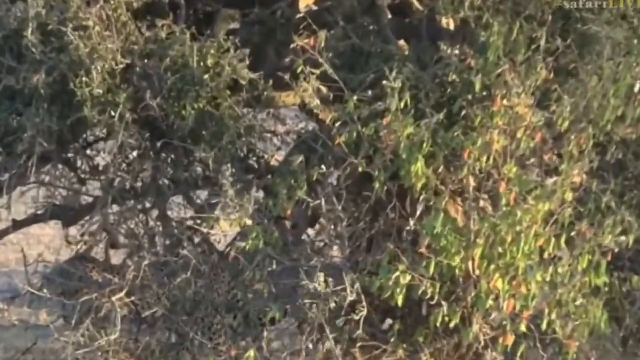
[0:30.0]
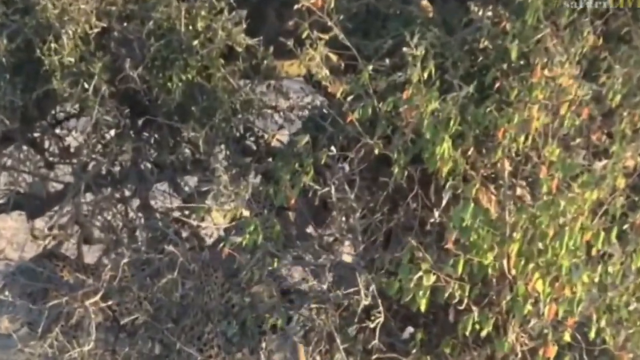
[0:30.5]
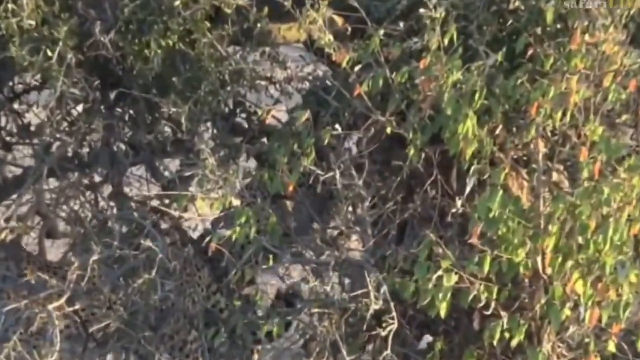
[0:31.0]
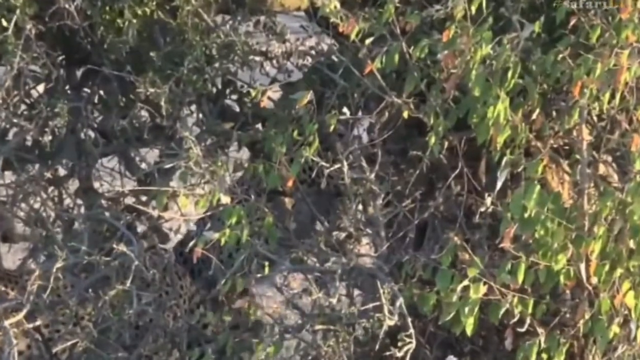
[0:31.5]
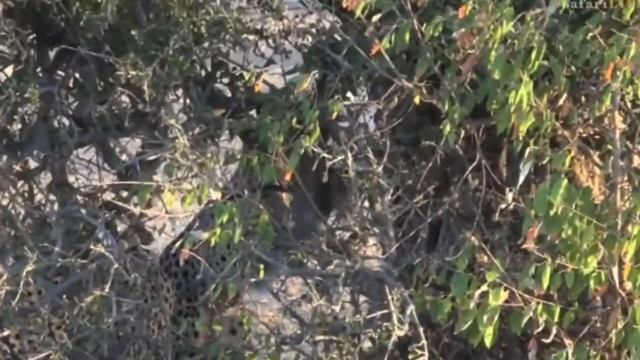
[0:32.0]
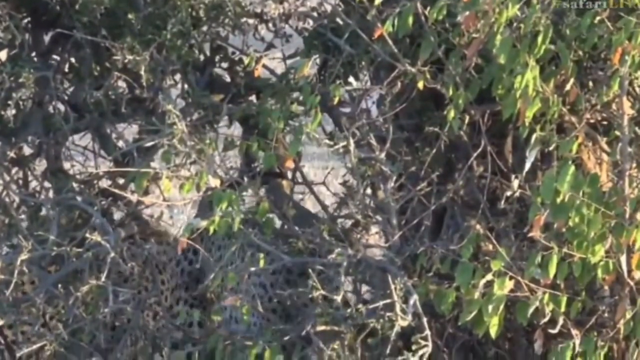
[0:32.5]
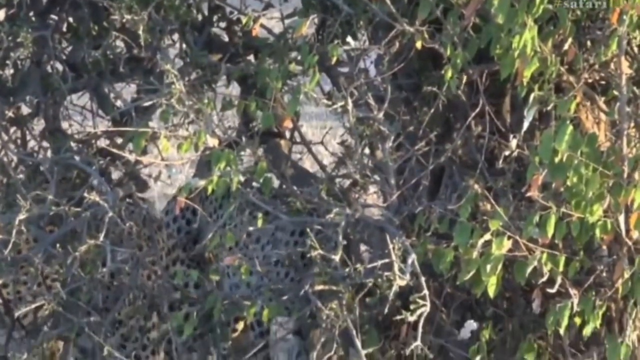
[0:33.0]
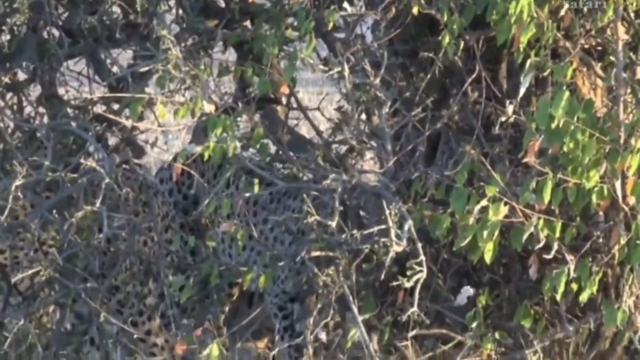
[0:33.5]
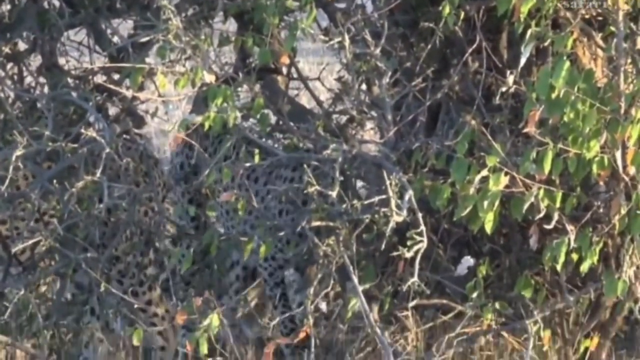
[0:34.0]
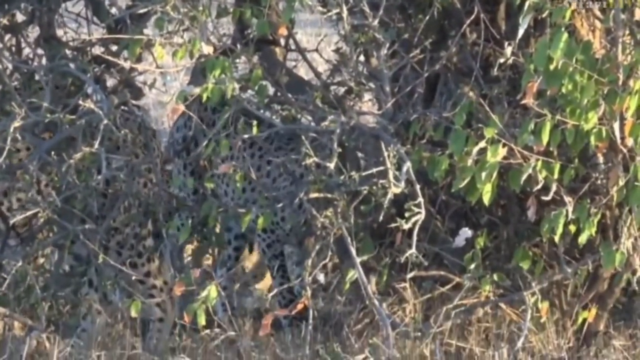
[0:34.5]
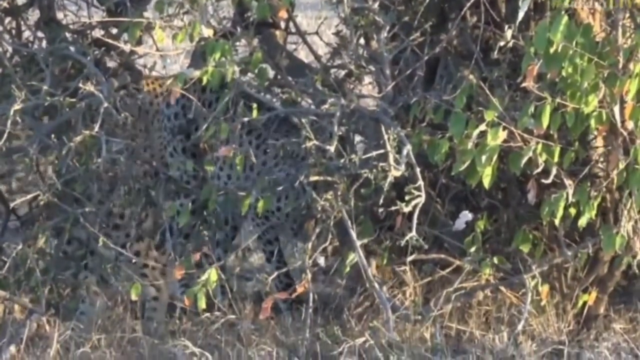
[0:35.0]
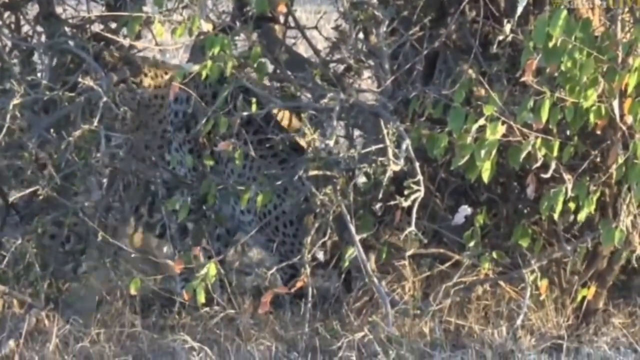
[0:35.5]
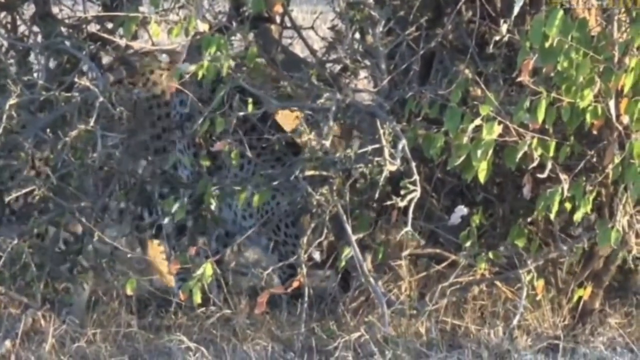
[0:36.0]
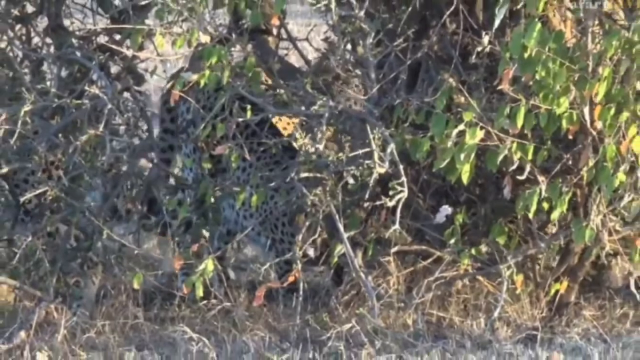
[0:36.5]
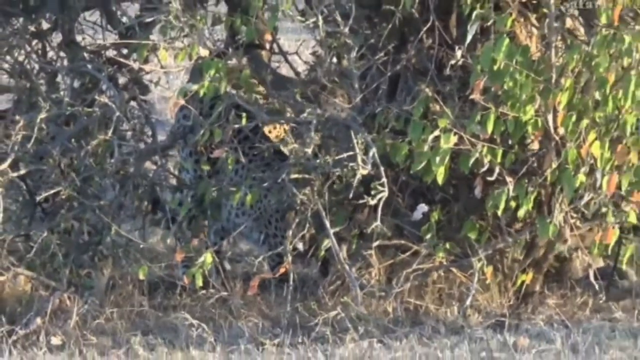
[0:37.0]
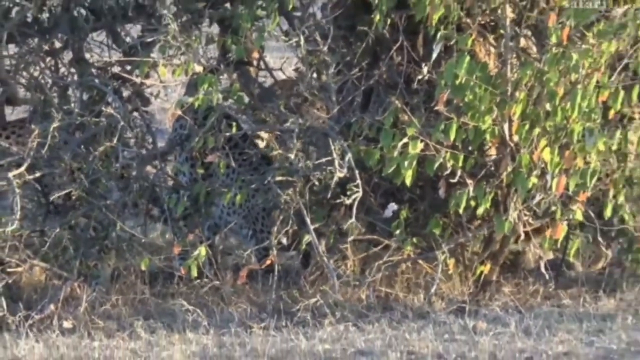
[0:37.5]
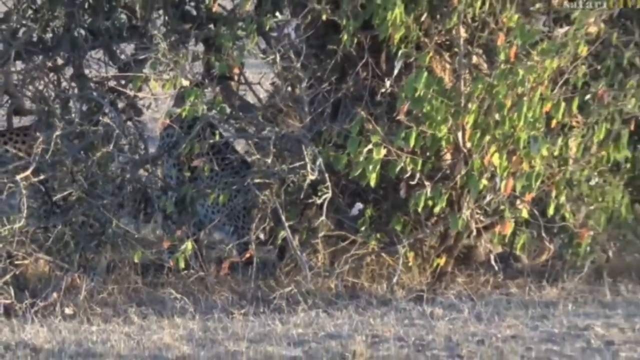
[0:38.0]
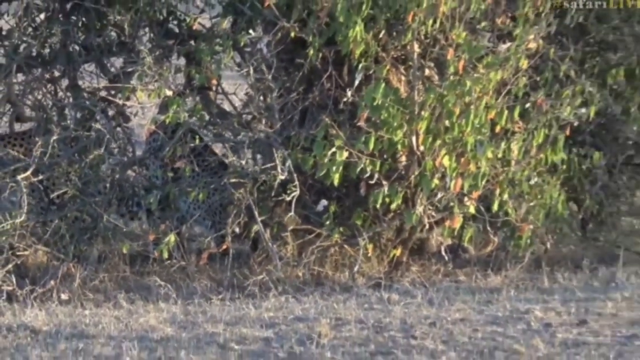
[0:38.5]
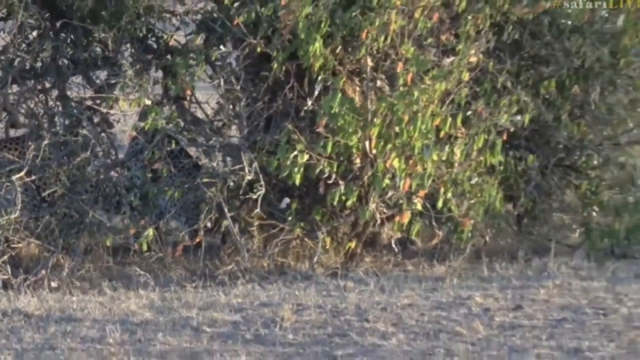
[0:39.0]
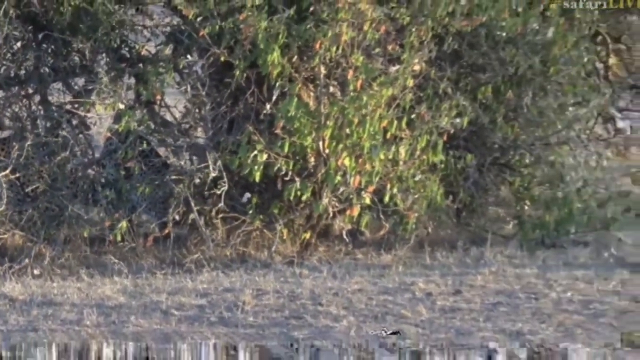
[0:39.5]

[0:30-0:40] The camera zooms in and then out, focusing on a group, or family, of cheetahs. Through an opening in the bush, several animals are relaxing. One cheetah puts its feet on a tree it wants to climb. As the camera zooms in, another cheetah walks, another plays around, and another stands. The camera keeps zooming in on the cheetahs, this family of animals.